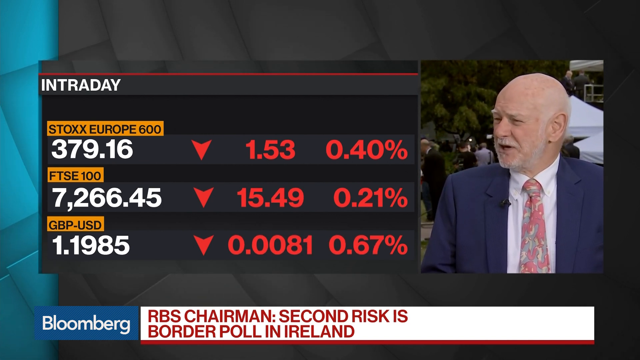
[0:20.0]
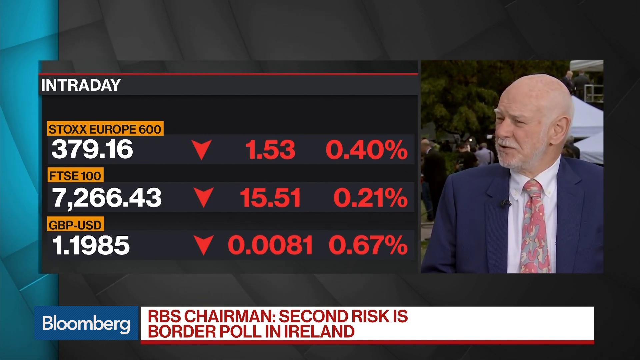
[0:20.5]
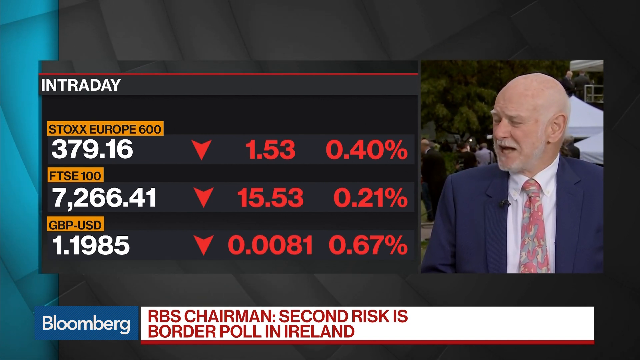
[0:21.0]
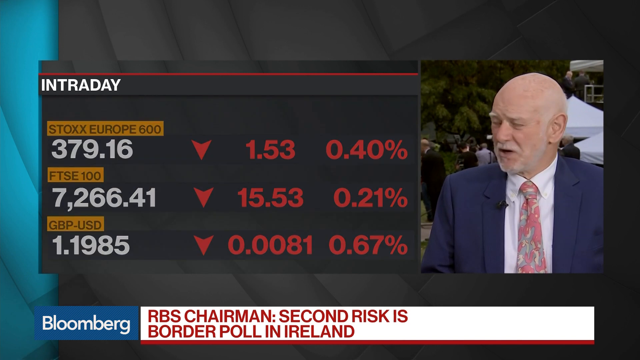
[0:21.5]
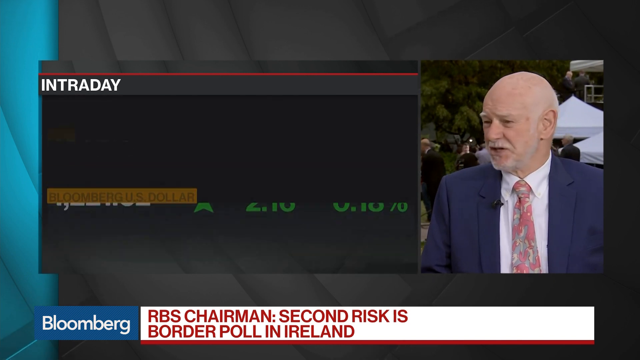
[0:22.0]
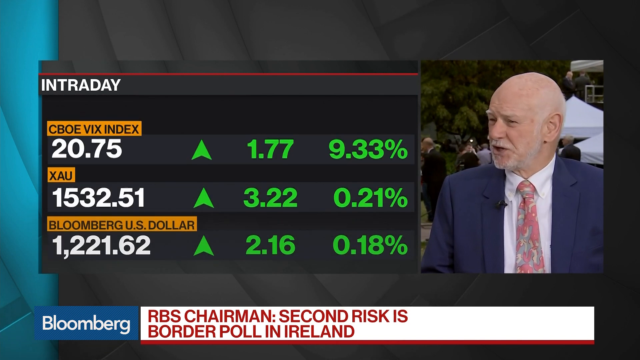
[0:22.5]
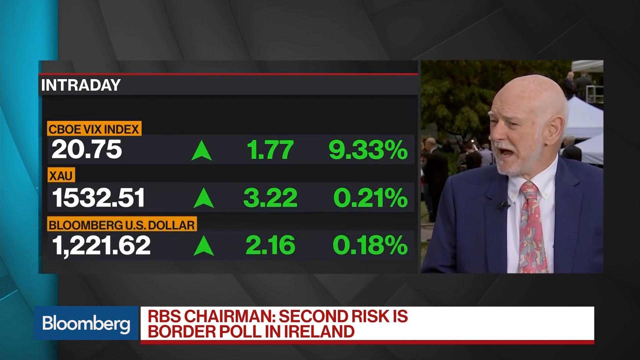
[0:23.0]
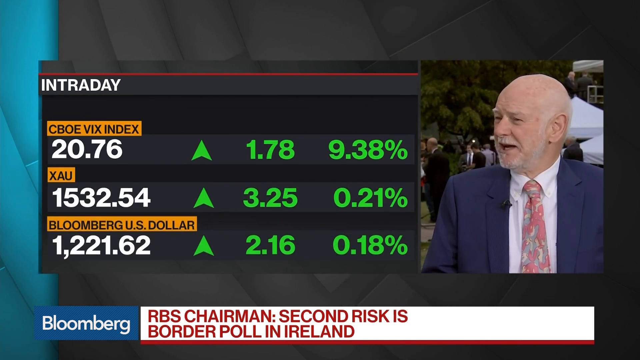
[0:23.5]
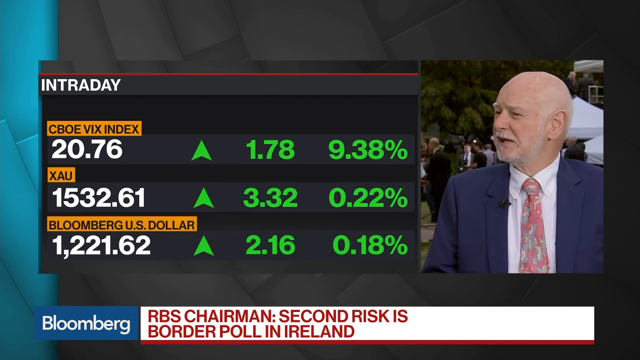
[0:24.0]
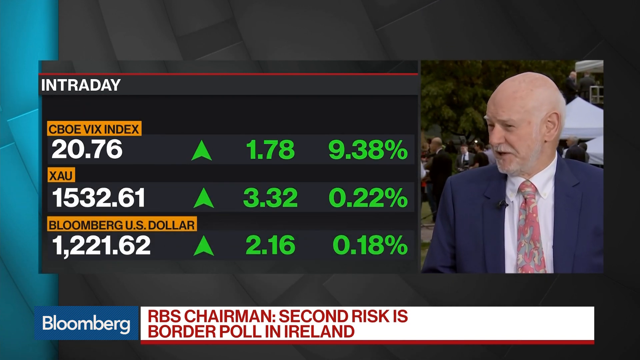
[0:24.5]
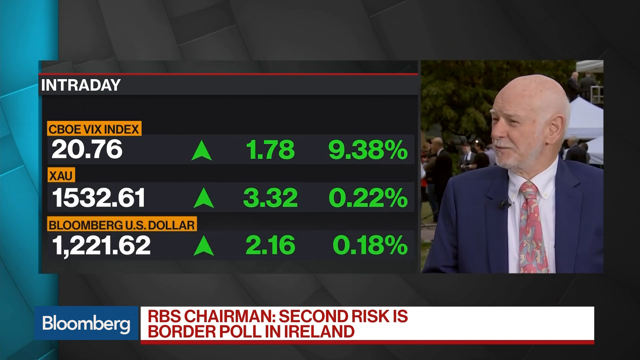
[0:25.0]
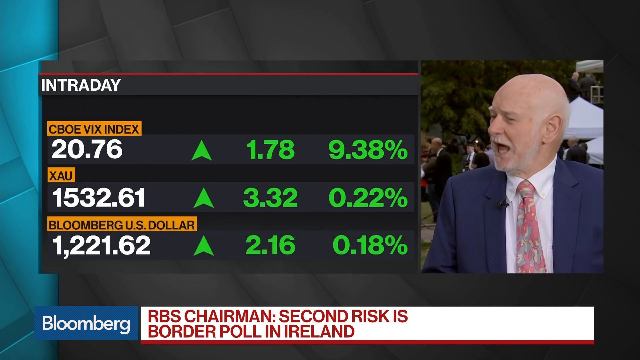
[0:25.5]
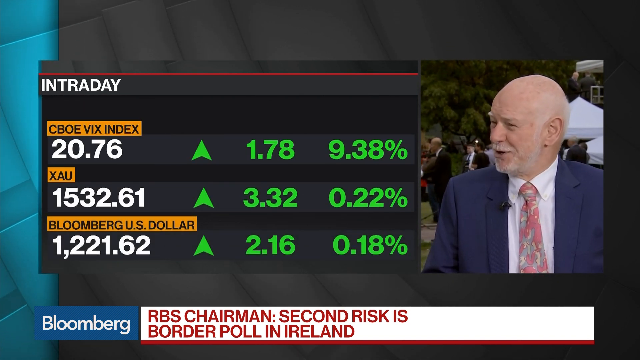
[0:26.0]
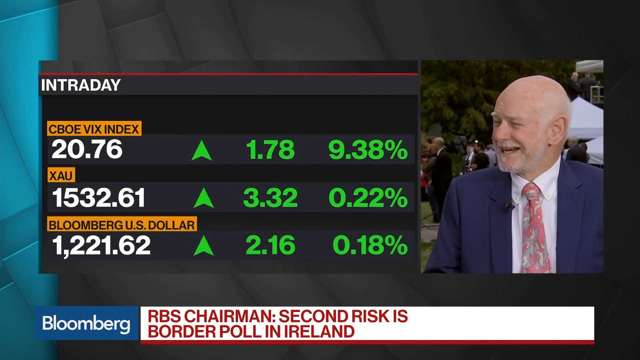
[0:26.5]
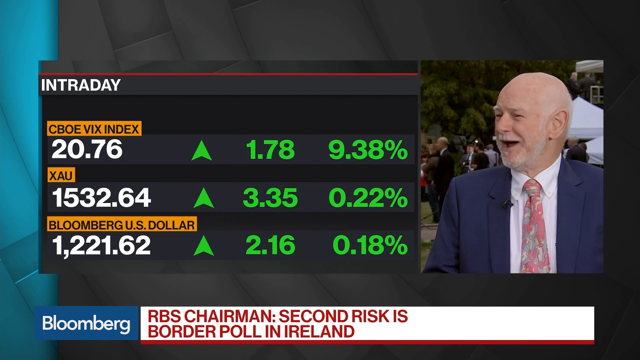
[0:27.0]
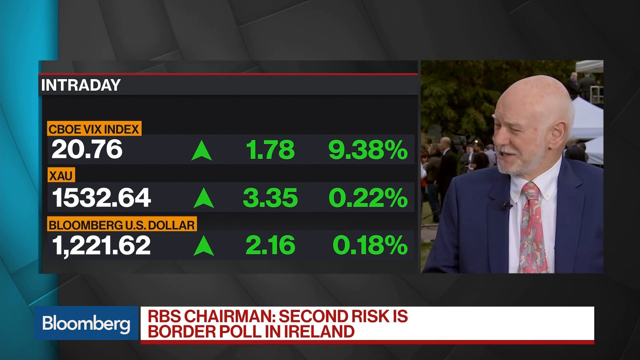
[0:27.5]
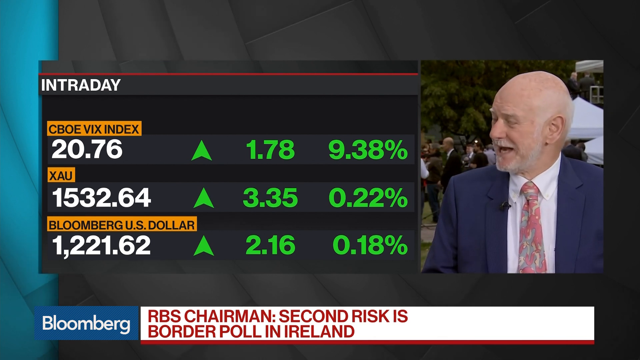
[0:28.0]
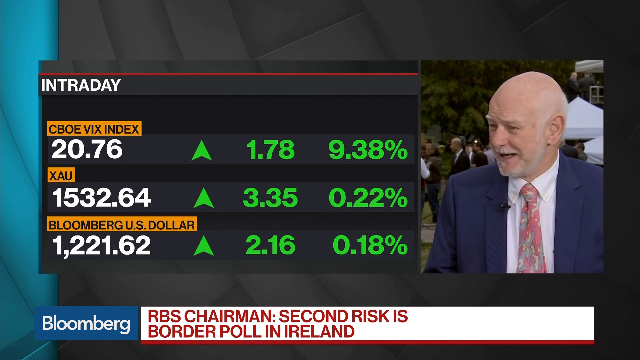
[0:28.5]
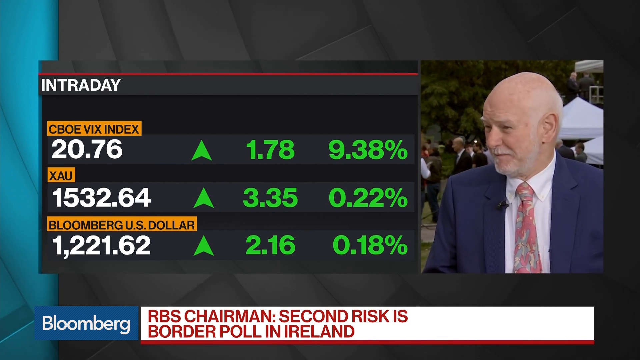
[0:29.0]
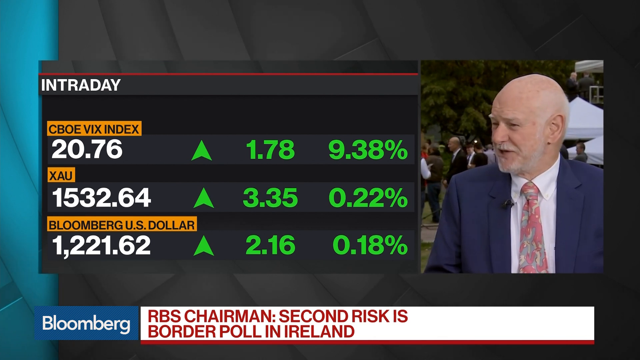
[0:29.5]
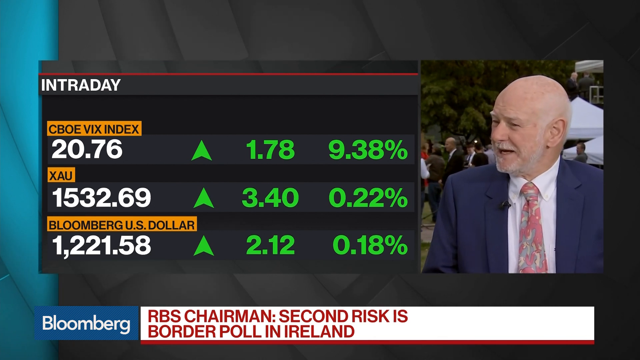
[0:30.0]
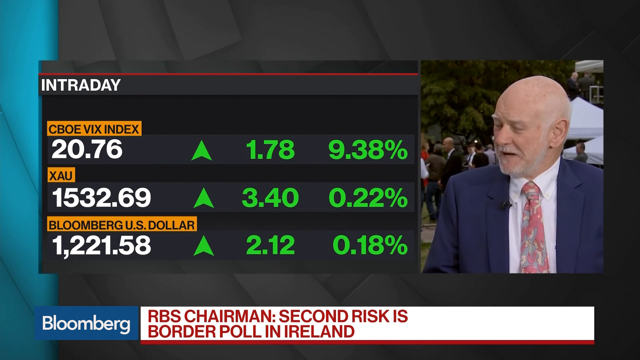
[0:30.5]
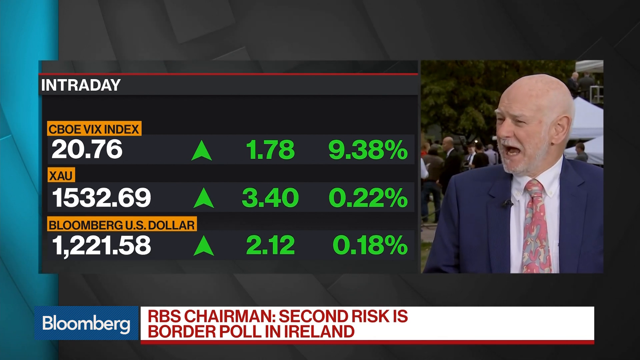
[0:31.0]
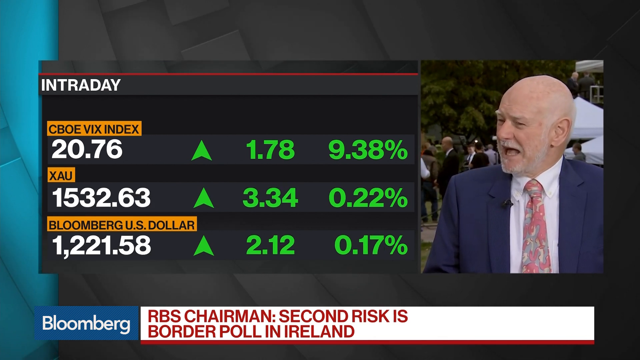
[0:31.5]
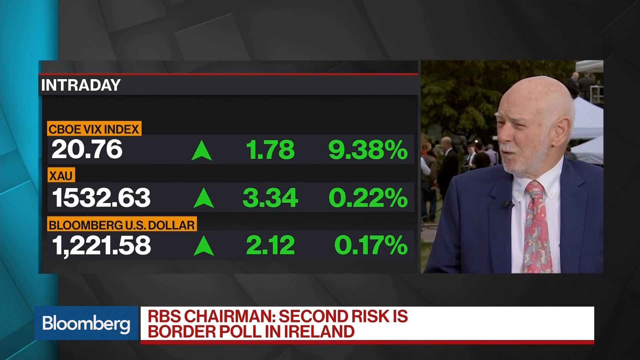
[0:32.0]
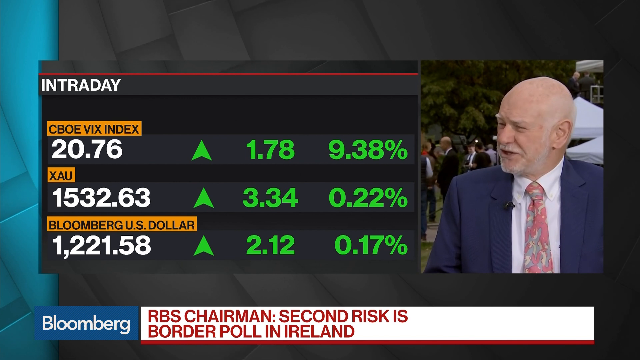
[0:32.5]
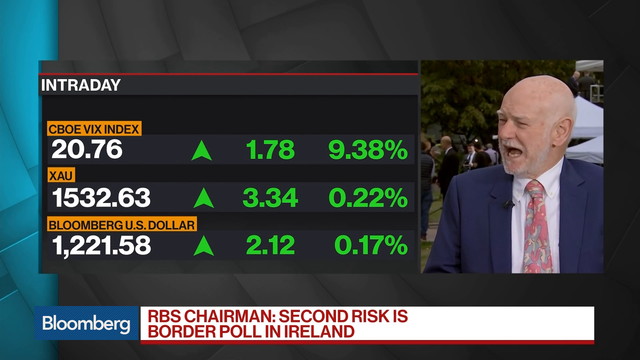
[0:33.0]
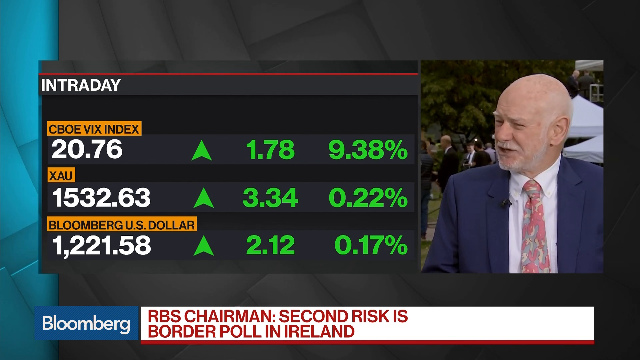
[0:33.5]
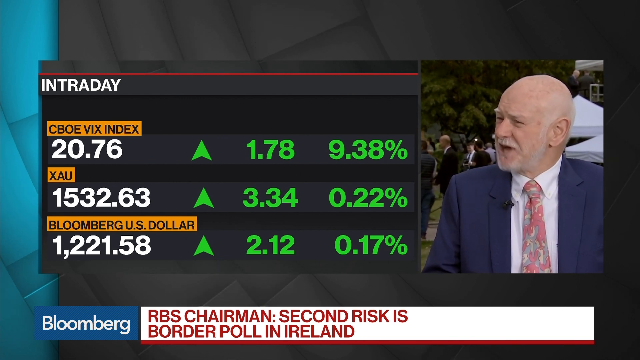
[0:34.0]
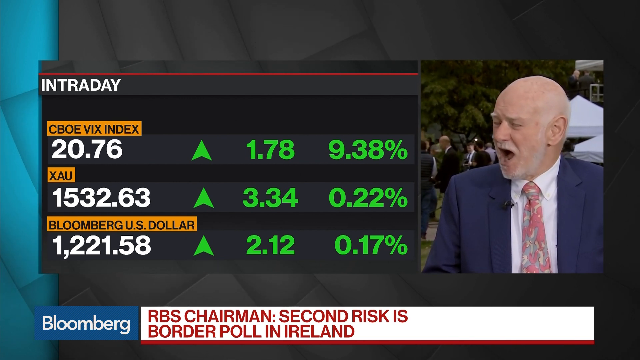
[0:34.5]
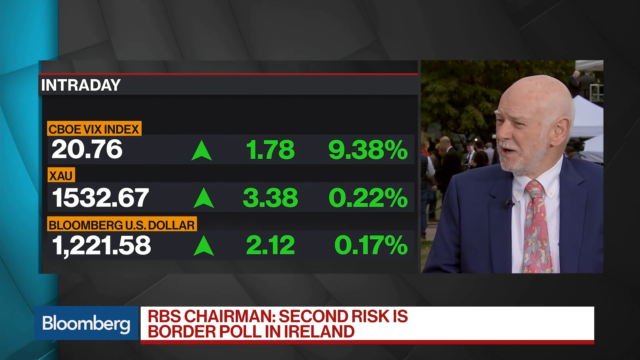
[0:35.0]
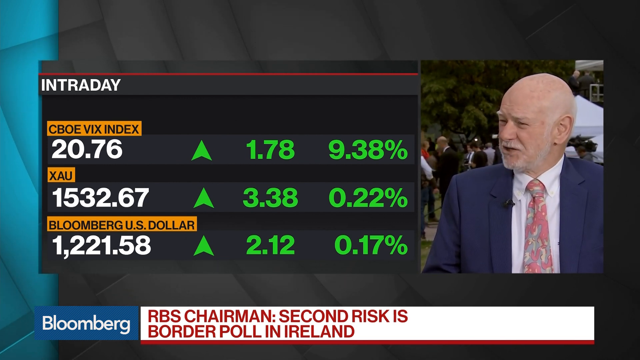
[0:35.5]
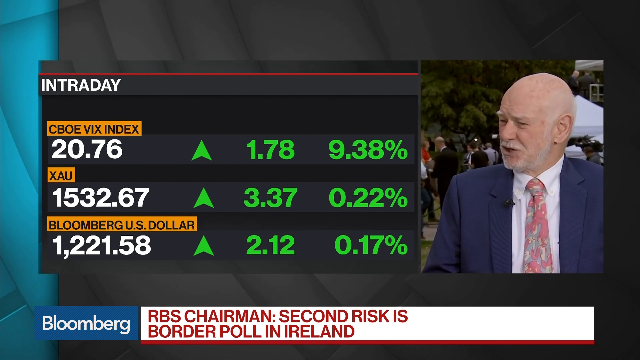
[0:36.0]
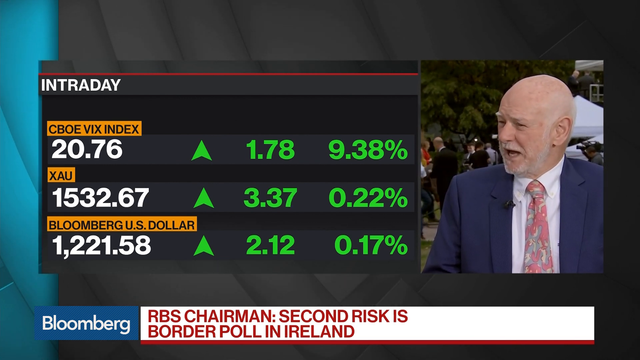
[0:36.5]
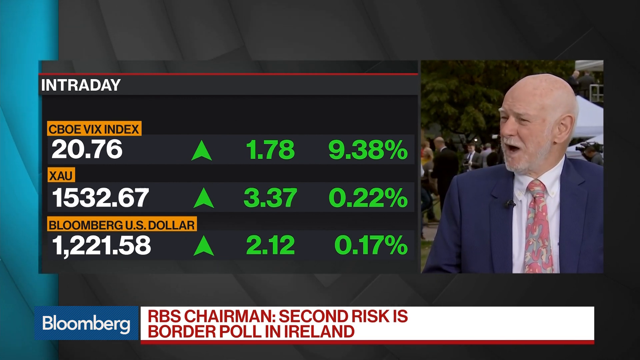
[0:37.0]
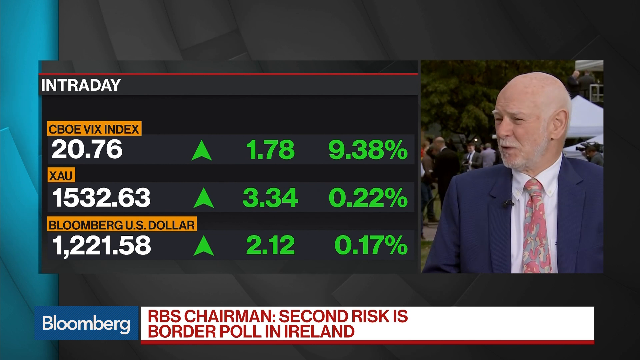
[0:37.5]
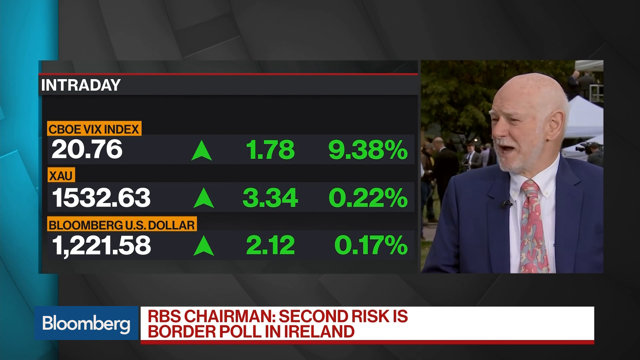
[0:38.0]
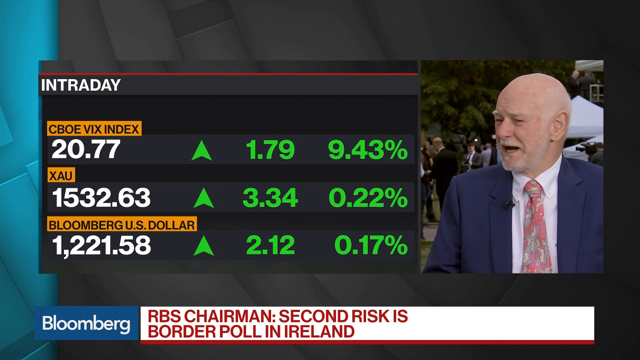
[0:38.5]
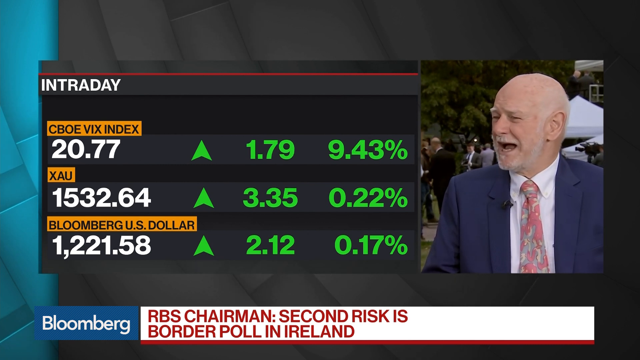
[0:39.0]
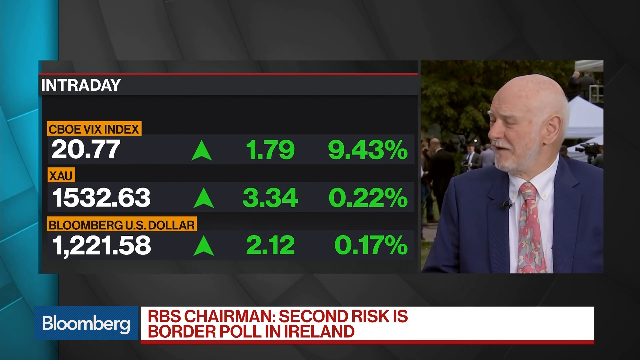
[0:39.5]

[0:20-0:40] An index labelled CBOVIX reads 220.76, marked in green with an upward arrow, alongside 1.78 and 99.38%. A figure labelled ZOW reads 15,32.63 with an upward arrow, up 3.34, 0.22%. The Bloomberg US dollar is at 1,221.58, up 2.12, 0.17%, shown under intraday. The man and the female reporter continue their discussion. Behind the man are people, about two white tents and trees. Intraday figures for Europe, including the FTSE, are also listed, and GBP USD is at 1.1985, 0.0081, 0.67%.